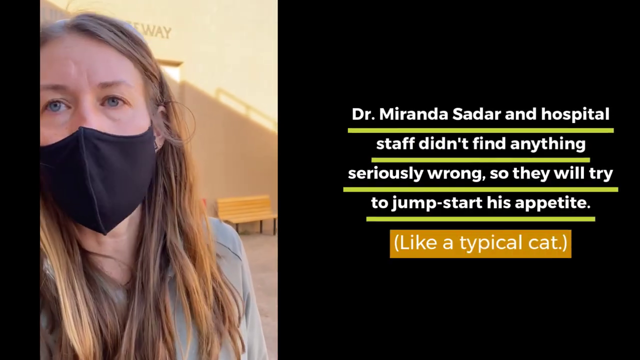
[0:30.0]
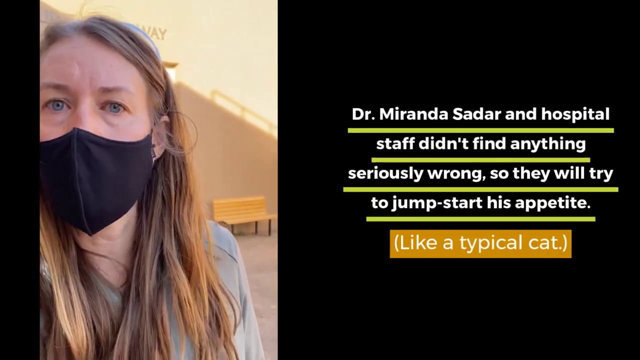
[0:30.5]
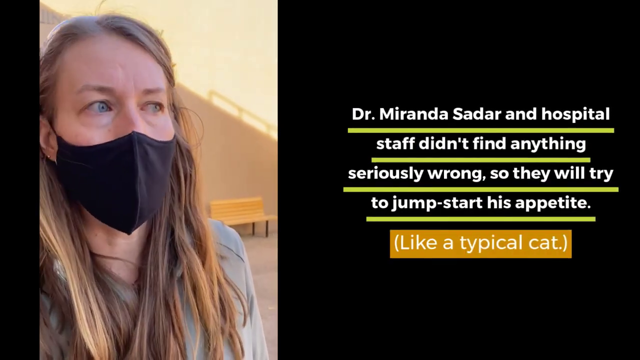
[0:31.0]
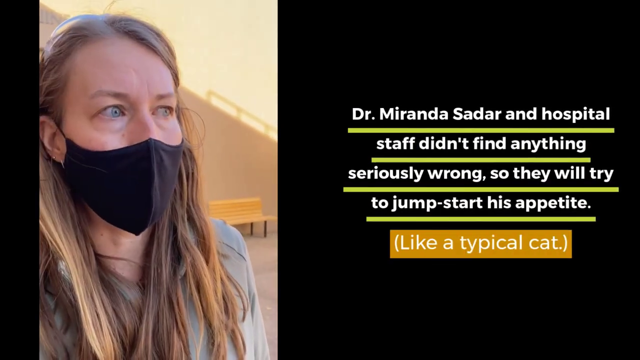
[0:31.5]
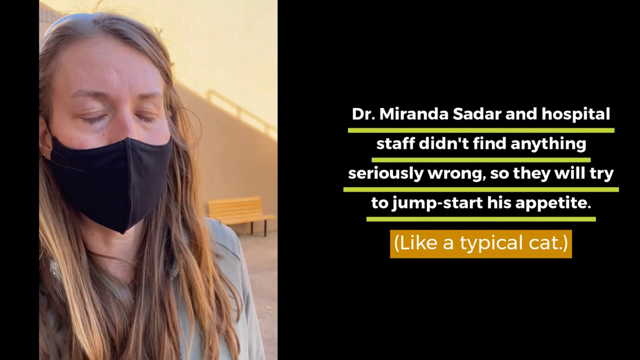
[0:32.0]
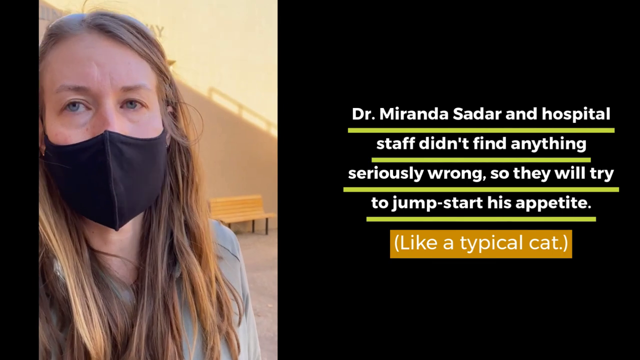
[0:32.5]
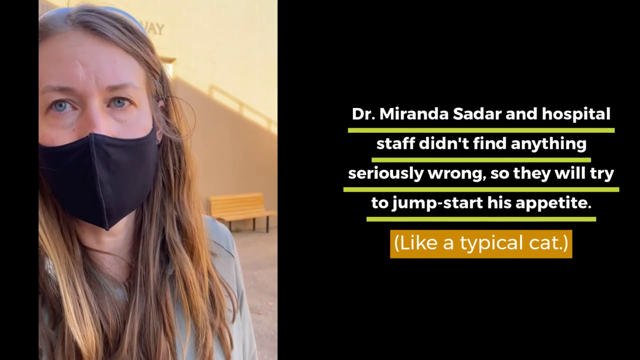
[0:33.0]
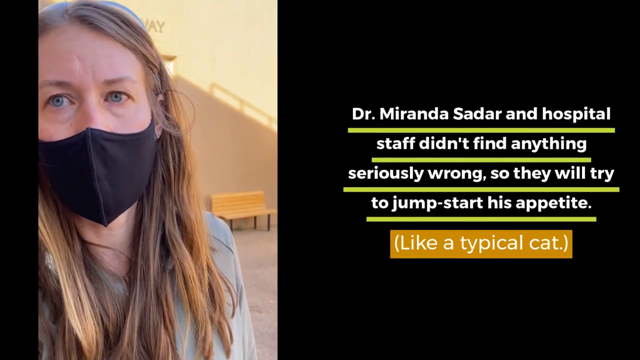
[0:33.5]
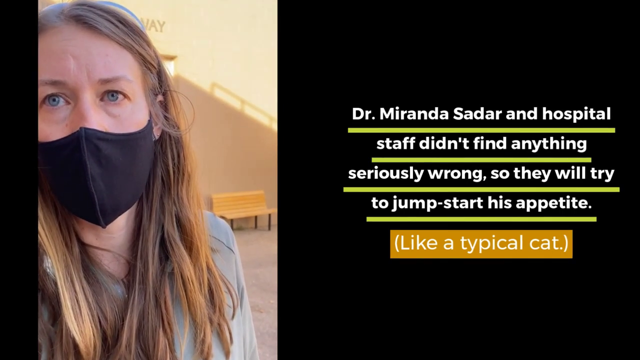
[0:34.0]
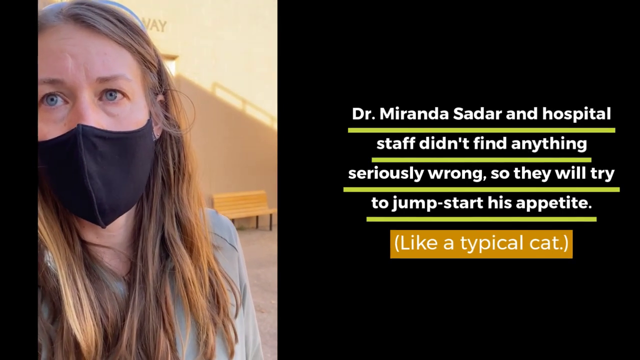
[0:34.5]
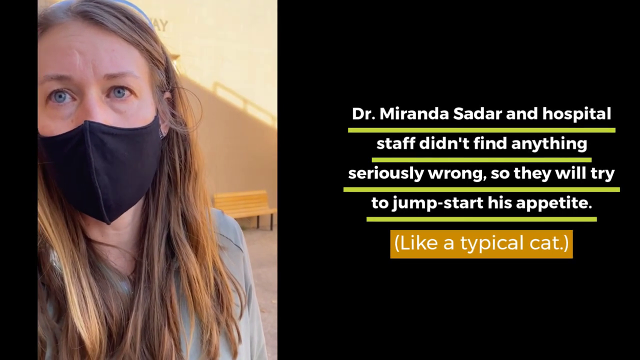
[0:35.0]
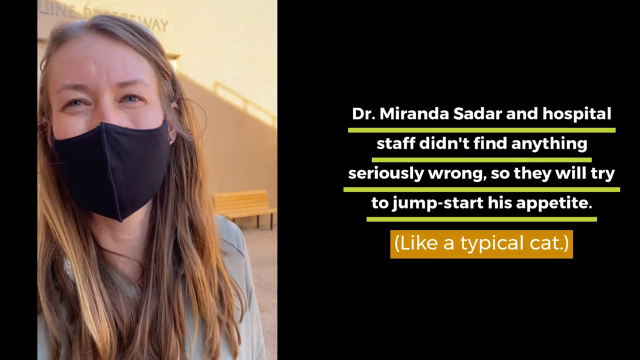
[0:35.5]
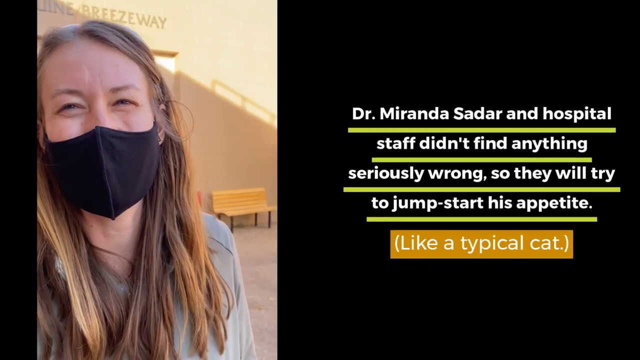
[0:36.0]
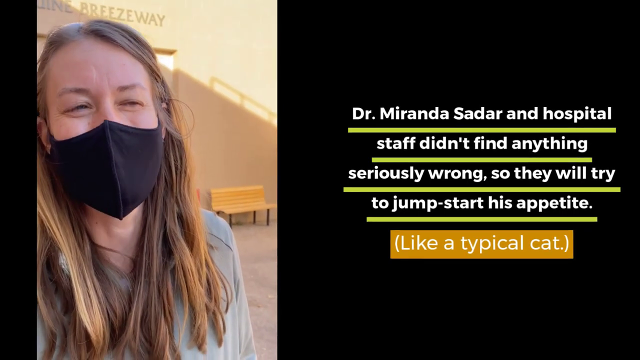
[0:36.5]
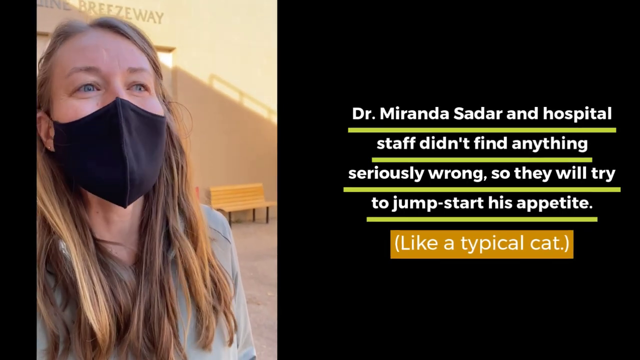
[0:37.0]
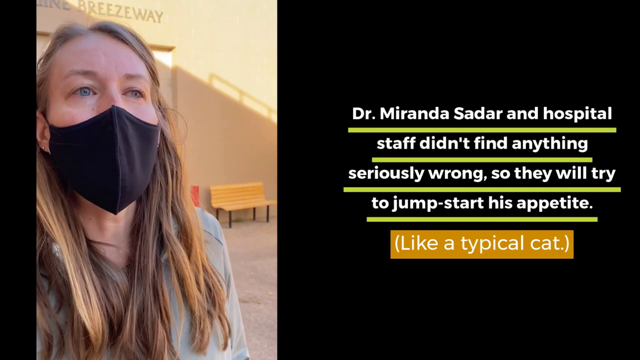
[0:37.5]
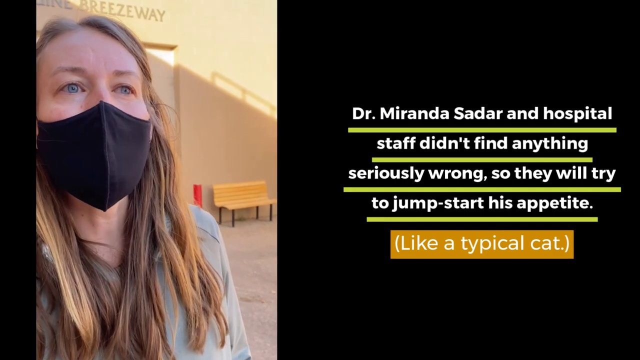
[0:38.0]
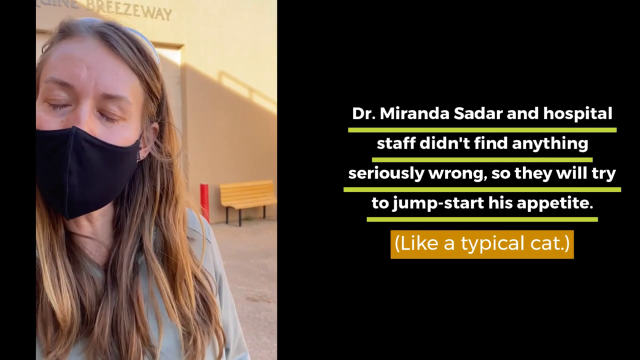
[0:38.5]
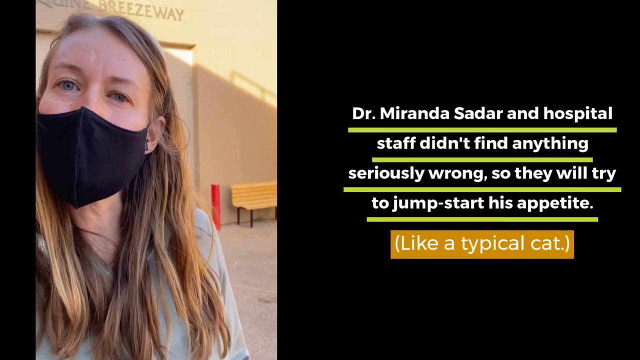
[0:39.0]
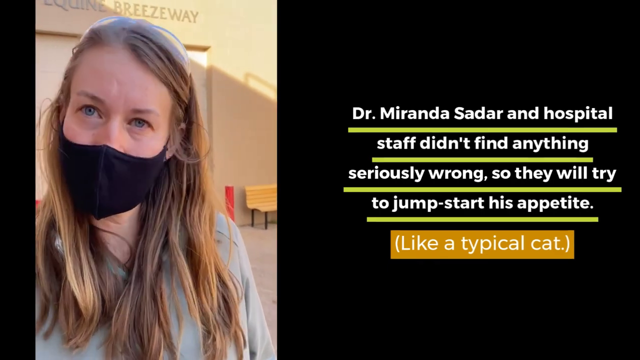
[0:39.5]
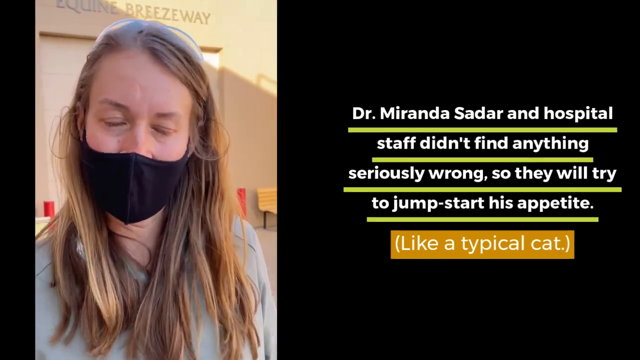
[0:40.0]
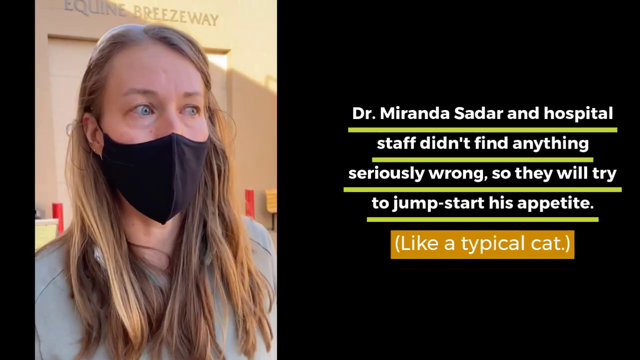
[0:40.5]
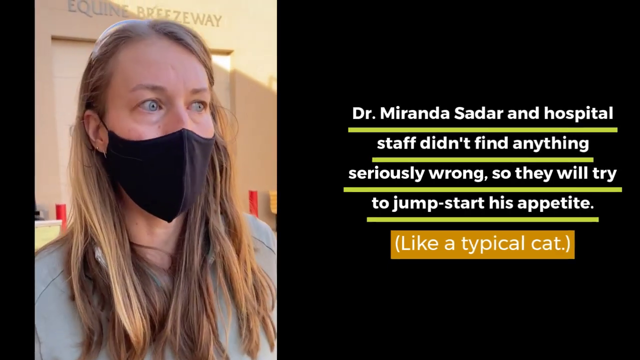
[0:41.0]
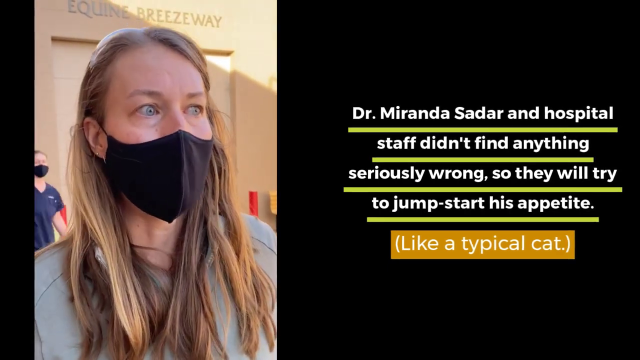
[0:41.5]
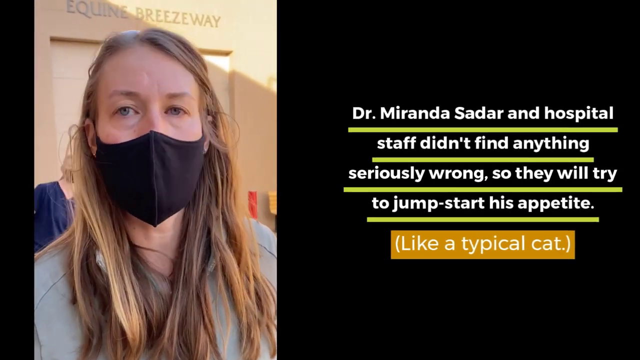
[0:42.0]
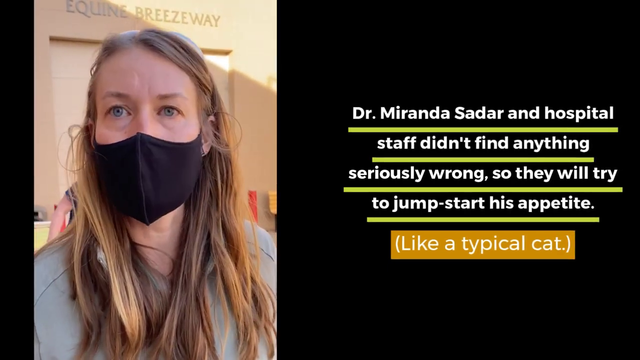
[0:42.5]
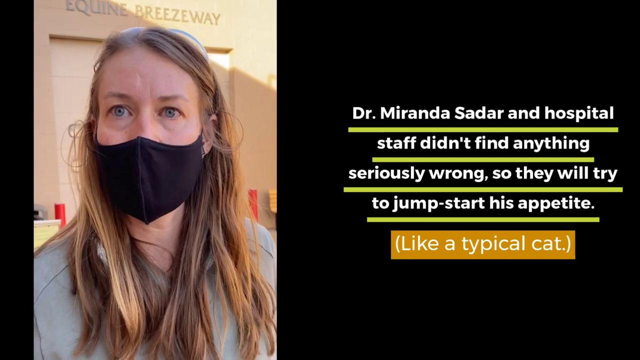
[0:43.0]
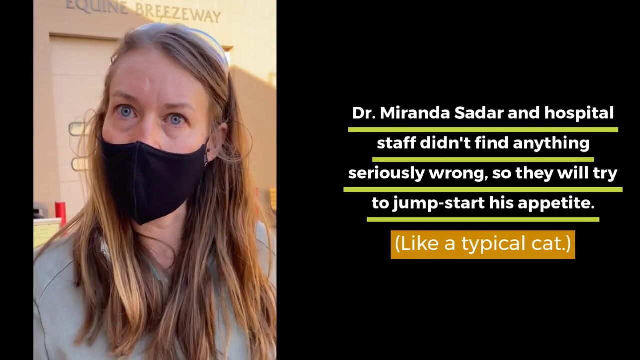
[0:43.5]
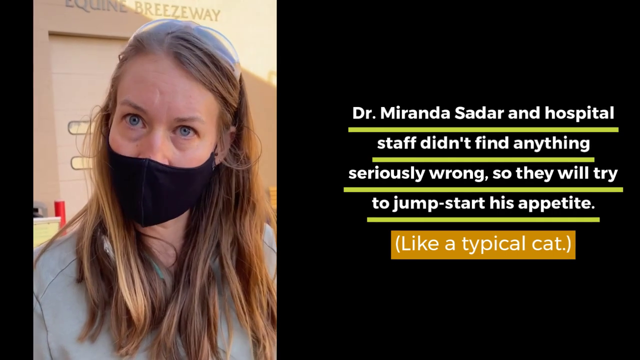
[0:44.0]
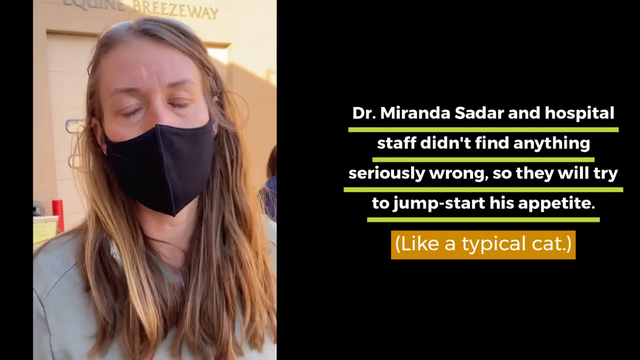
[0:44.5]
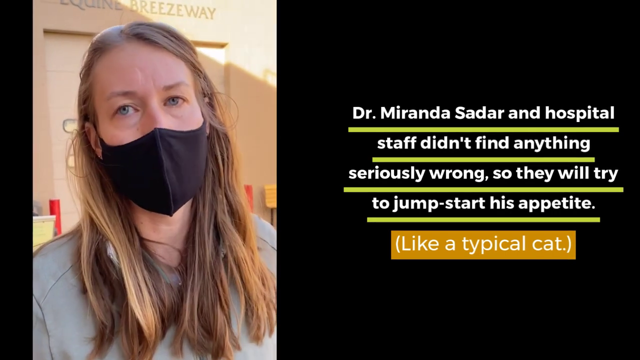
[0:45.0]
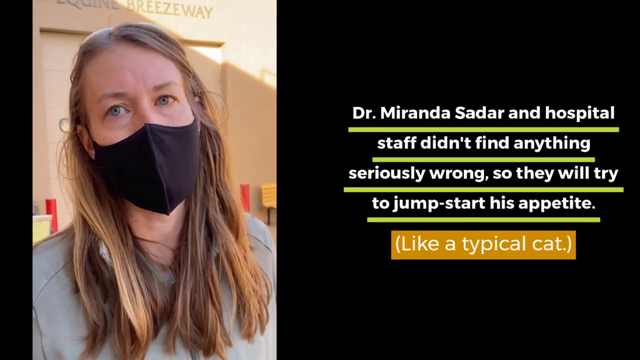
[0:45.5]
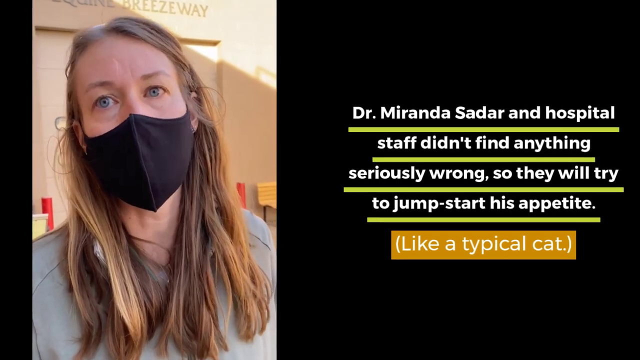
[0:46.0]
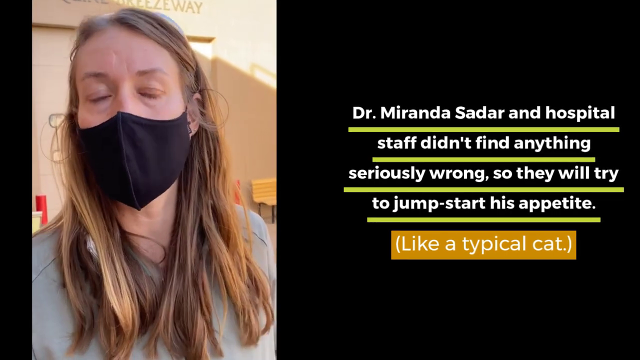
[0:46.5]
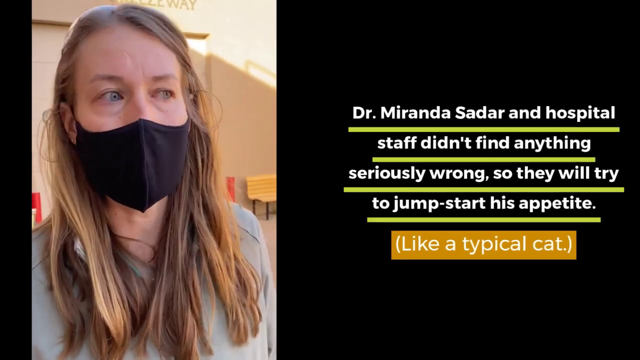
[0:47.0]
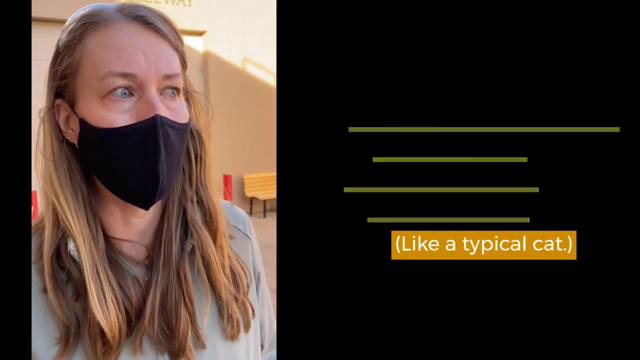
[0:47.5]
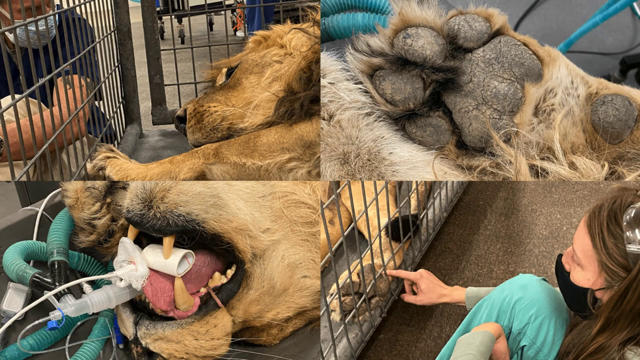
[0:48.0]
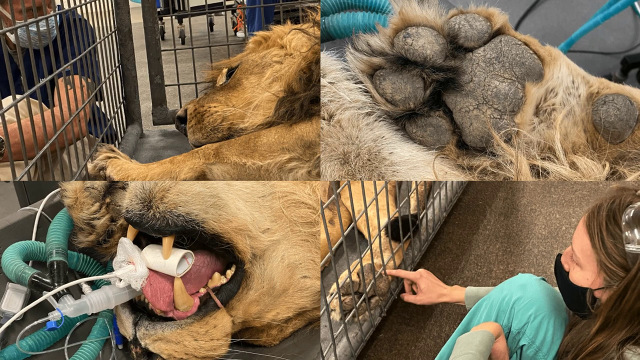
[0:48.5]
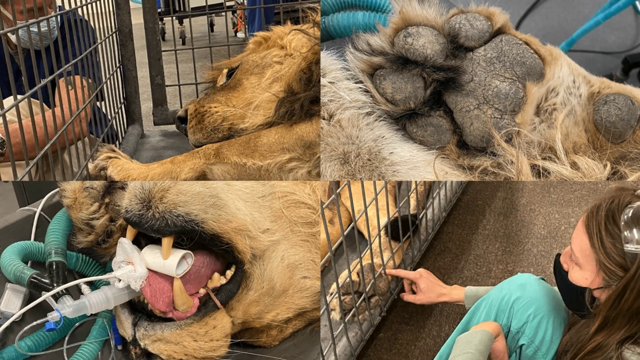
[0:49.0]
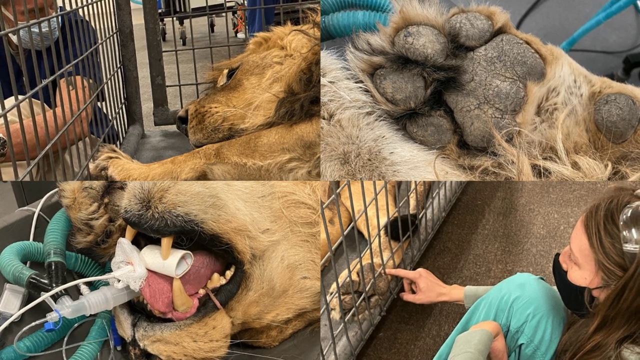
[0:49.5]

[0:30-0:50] On a black screen, a tall, narrow video on the left shows a woman with straight dirty blonde hair a little past her shoulders and blue eyes, wearing a black mask over her nose and mouth. Text on the right reads "Dr. Miranda Sadar and hospital staff didn't find anything seriously wrong, So they will try to jump-start his appetite." and underneath, in parentheses, "like a typical cat." The woman talks with the mask over her face; her expressive eyes look down and to her left, then back at the person she is speaking to, then wrinkle up as if smiling, and she continues talking. Next, a collage of four images appears. Top left: a close-up of the lion laying in its cage with its head down and its paw on the front of the cage, with what looks like a vet in a mask and blue shirt in front of the cage observing it. Top right: a close-up of the lion's paw, which looks kind of gray and cracked. Bottom left: a close-up of the lion's mouth as it lays on its back under anesthesia, mouth open, with a white tube-like roll underneath its tongue and some tubes that look attached to other devices going into its mouth. Bottom right: what looks like a vet sitting next to the cage, kind of putting her finger into the cage and touching the lion's foot, which is against the side of the cage.